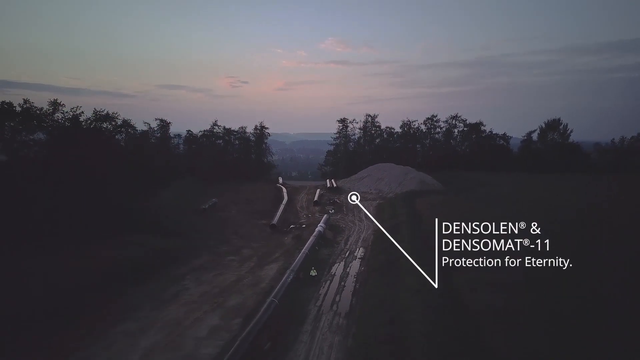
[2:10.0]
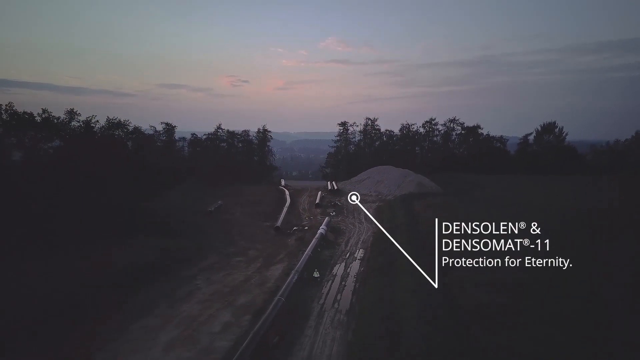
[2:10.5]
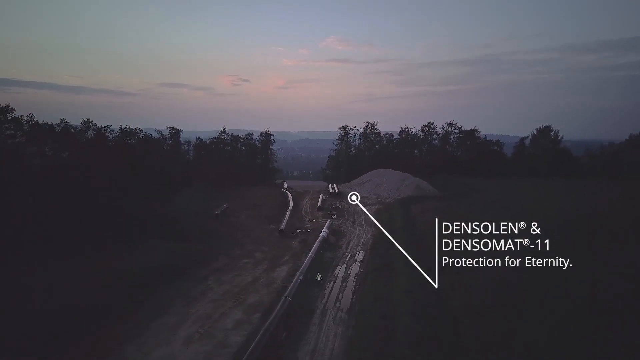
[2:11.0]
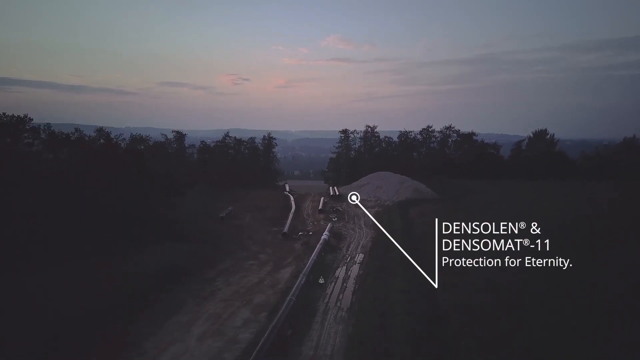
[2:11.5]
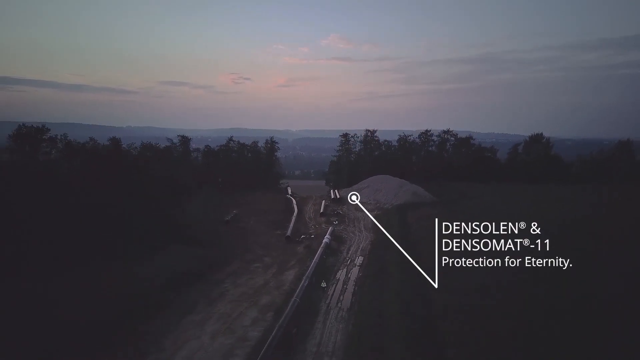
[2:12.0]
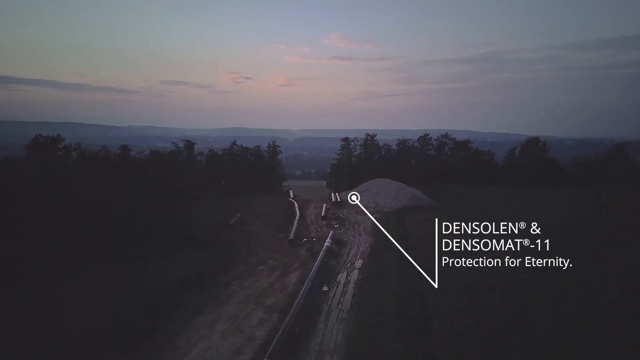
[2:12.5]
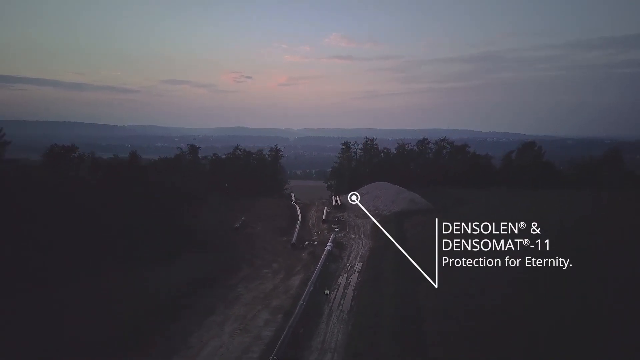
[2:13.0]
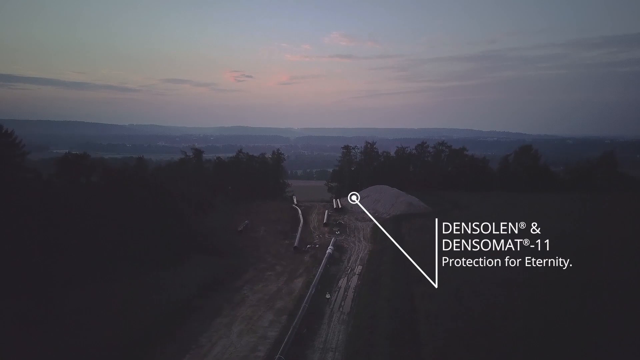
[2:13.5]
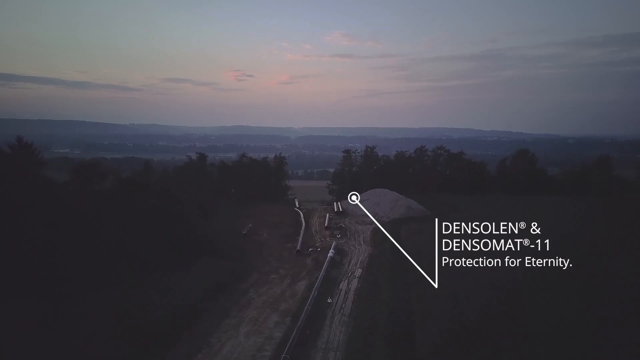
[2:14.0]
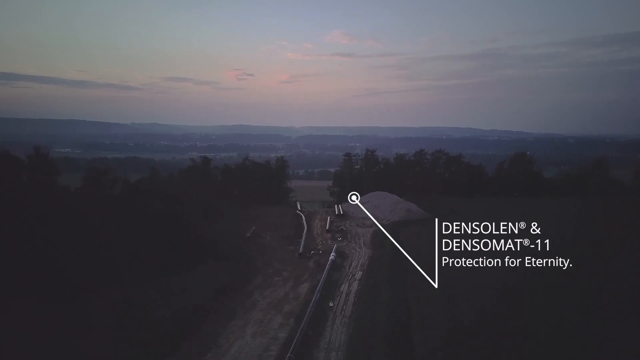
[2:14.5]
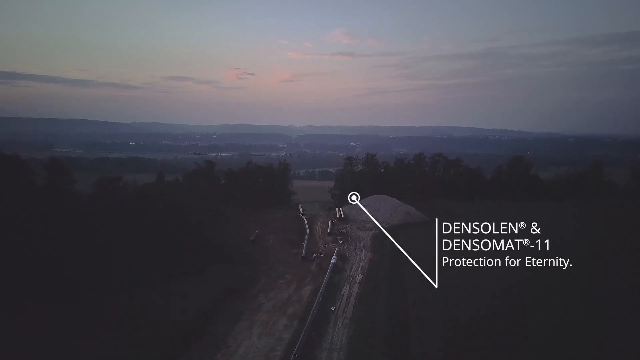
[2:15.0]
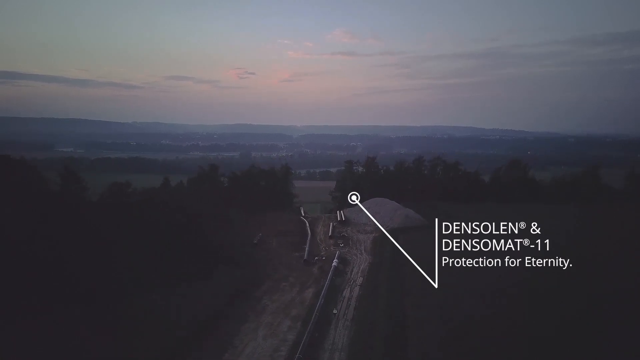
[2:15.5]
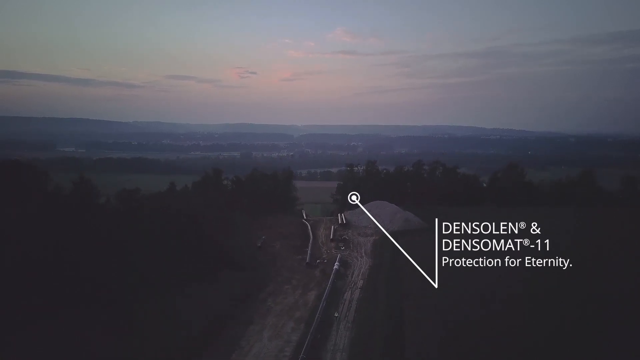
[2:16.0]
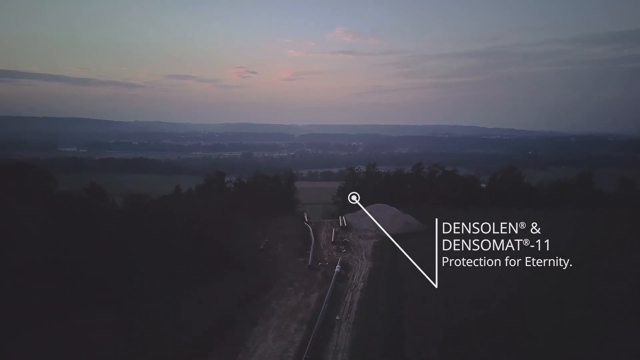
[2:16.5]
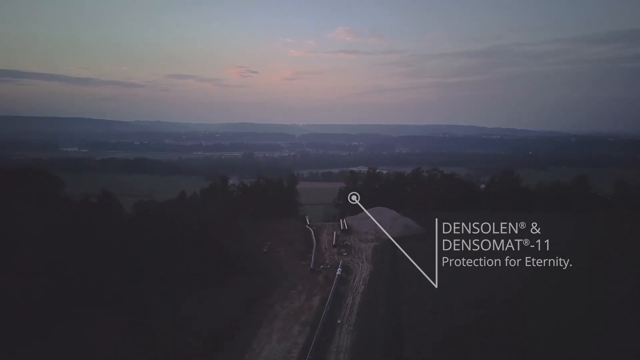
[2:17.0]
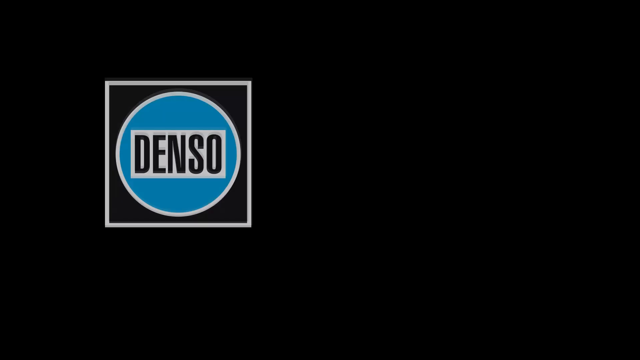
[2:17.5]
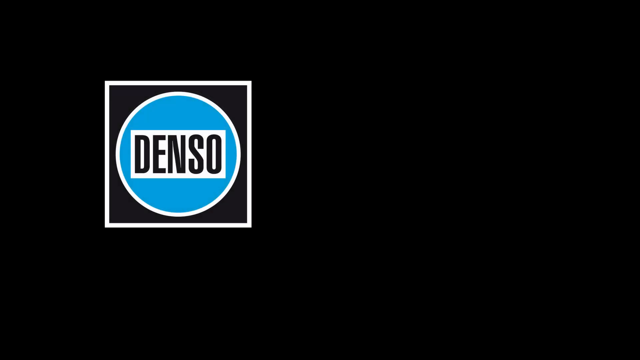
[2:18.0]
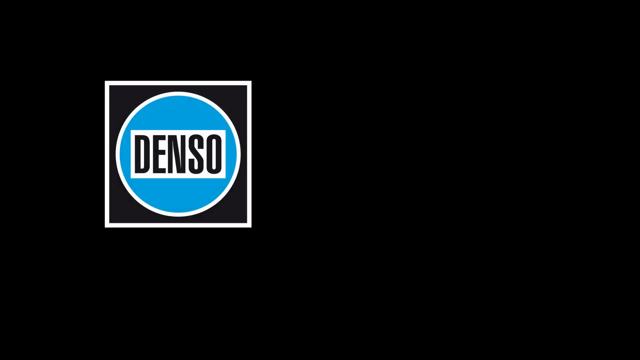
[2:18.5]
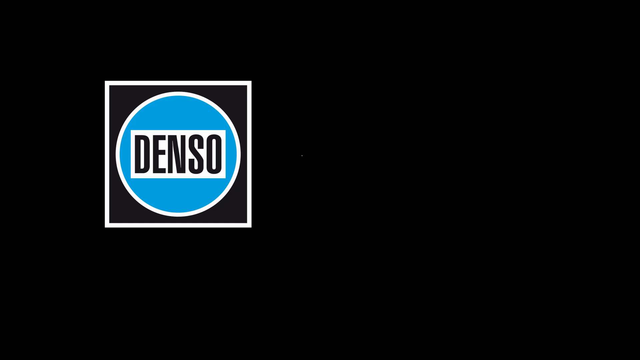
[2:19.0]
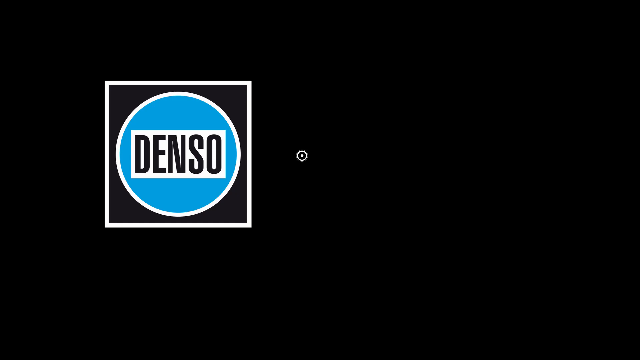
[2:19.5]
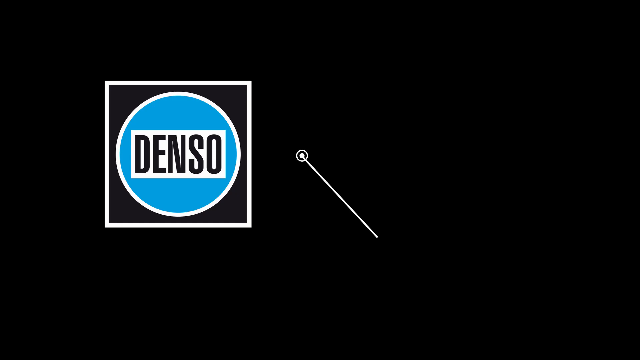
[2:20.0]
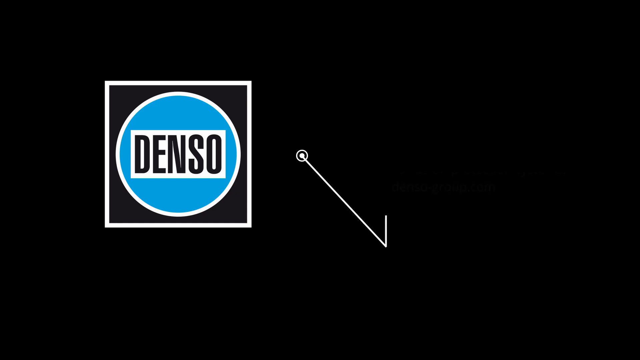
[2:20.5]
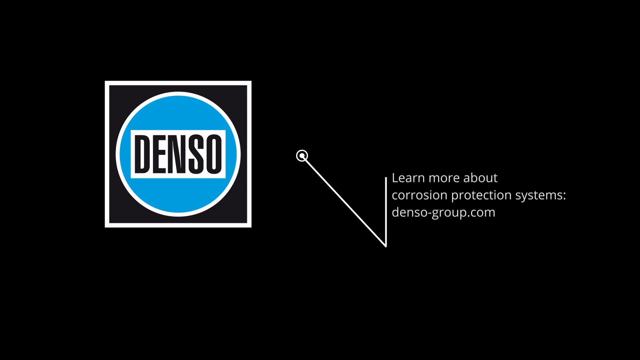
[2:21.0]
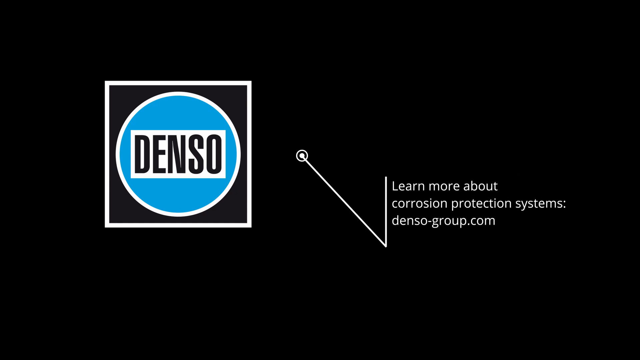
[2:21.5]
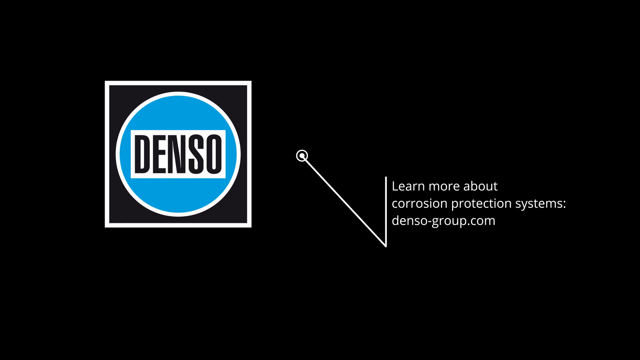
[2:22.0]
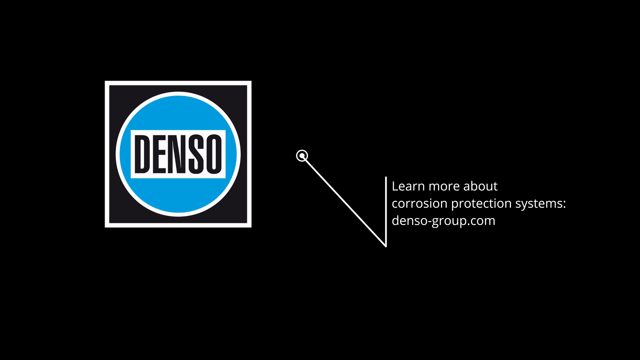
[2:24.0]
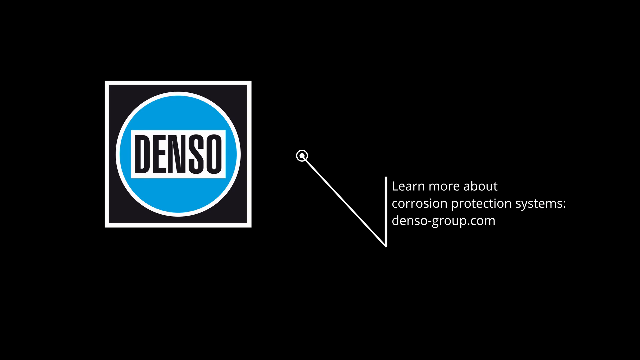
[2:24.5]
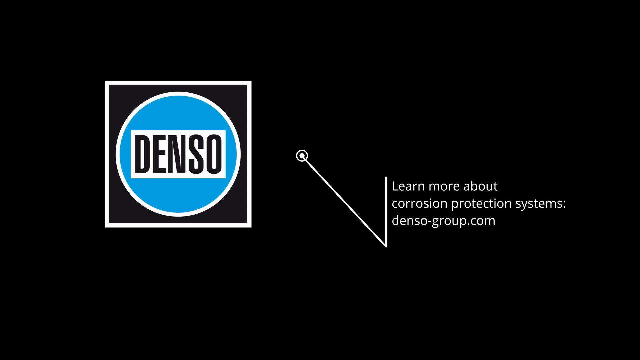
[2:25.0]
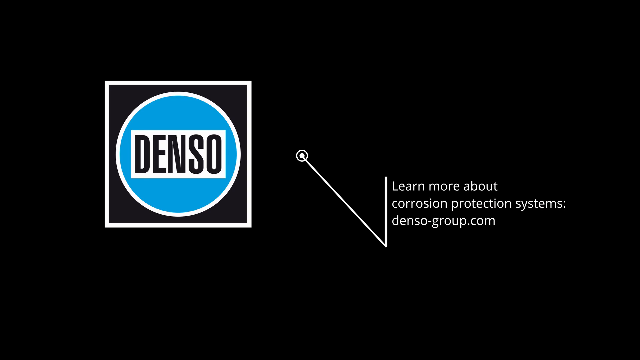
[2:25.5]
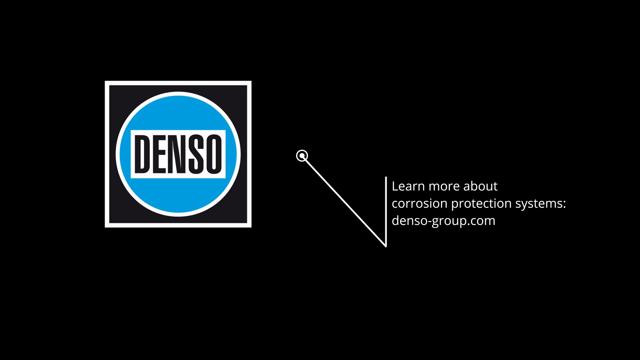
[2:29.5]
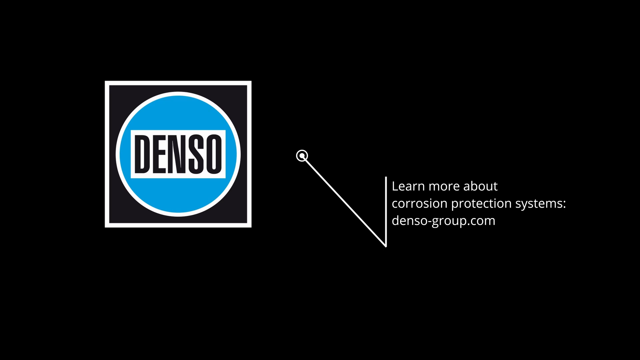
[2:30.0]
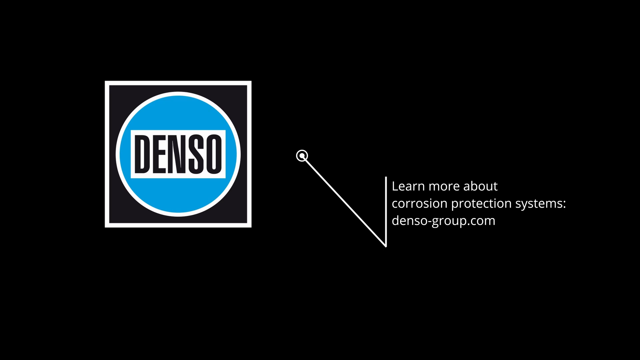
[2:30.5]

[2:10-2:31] Countryside appears where land is being cleared to lay pipelines, with a direct dirt path containing some puddles. A pin marks the area with the text "Densolen and Densomat Protection for Eternity," and the pin kind of goes into the countryside. The pipes to be placed lie next to the path created for them. The Densolen company label appears: a white square with a black background inside, followed by a blue circle outlined in white, with the name Denso in black letters within a white rectangle in the middle. A little pin with a diagonal line going up appears. The closing text reads "learn more about corrosion protection system densogroup.com."